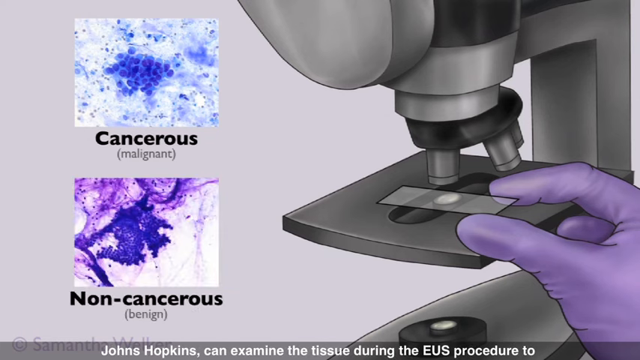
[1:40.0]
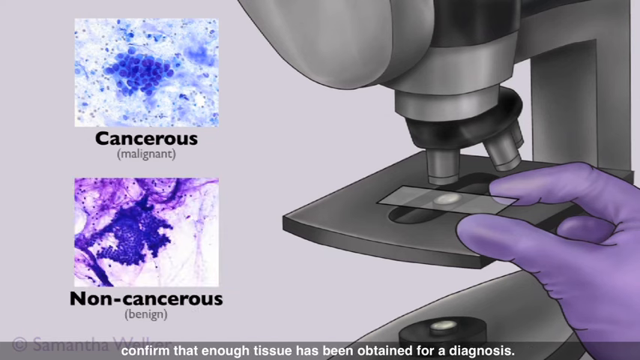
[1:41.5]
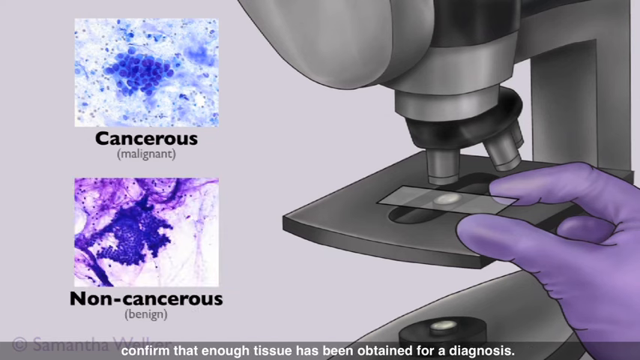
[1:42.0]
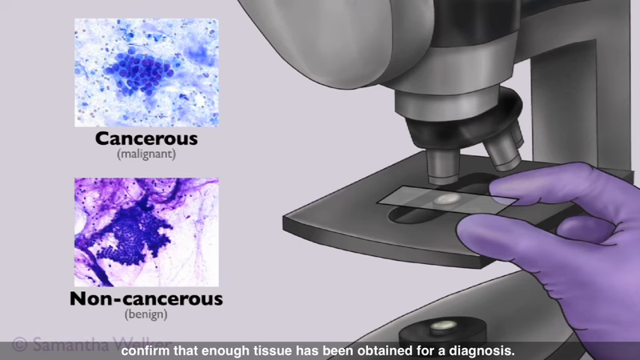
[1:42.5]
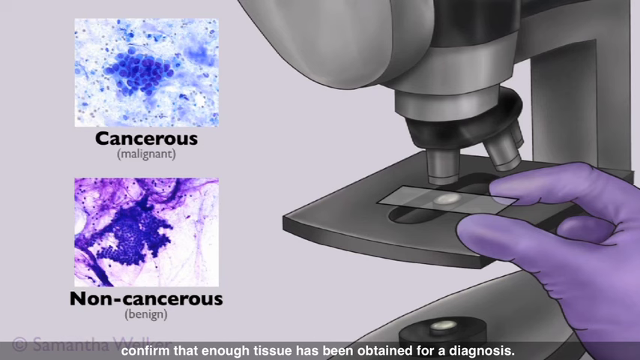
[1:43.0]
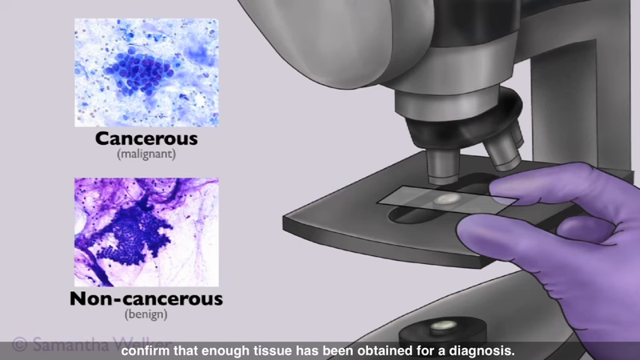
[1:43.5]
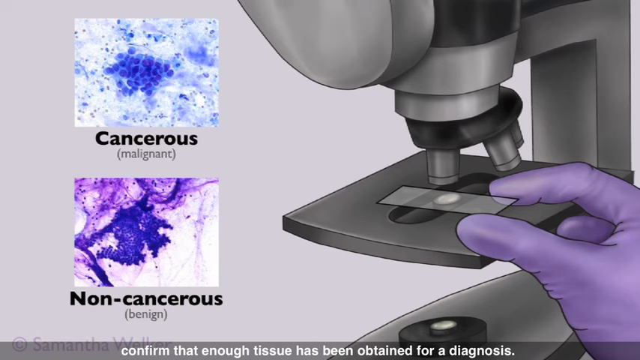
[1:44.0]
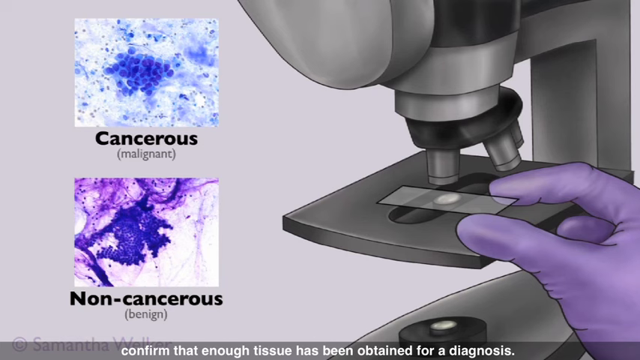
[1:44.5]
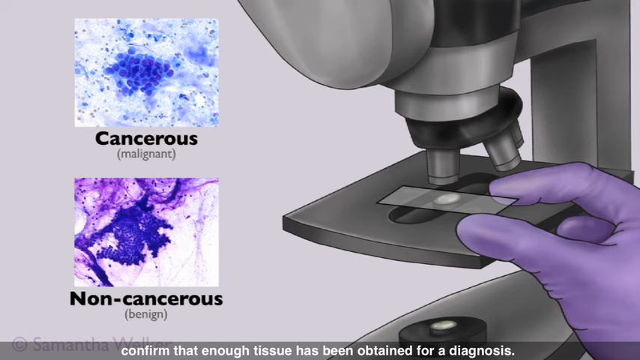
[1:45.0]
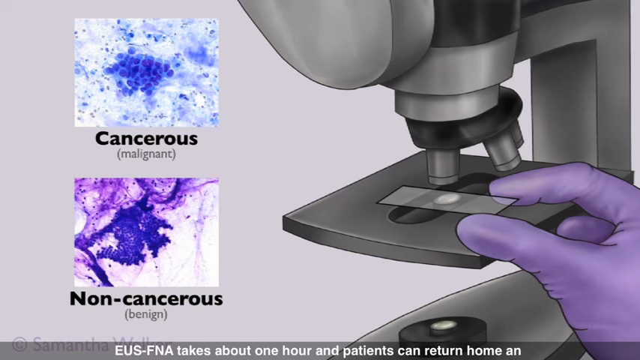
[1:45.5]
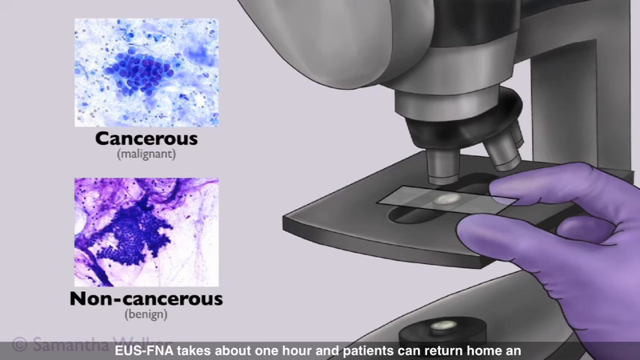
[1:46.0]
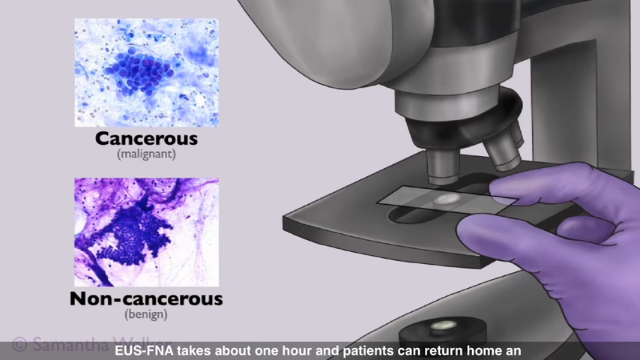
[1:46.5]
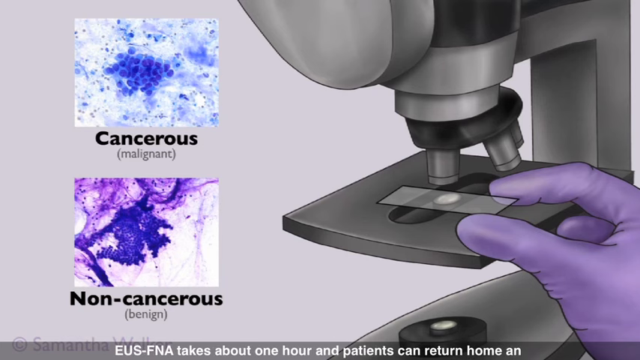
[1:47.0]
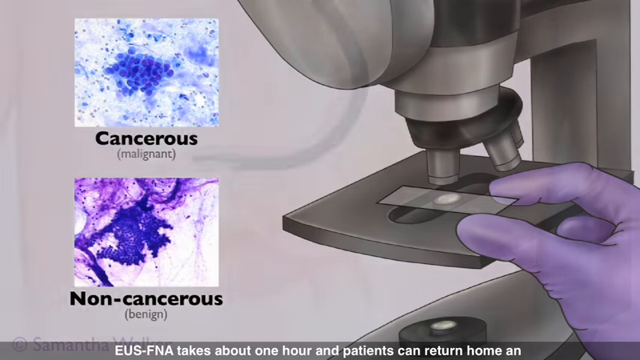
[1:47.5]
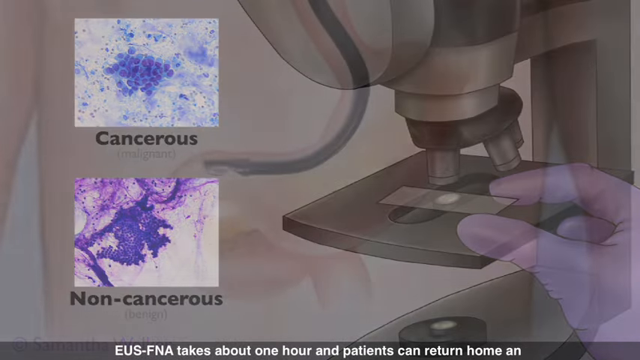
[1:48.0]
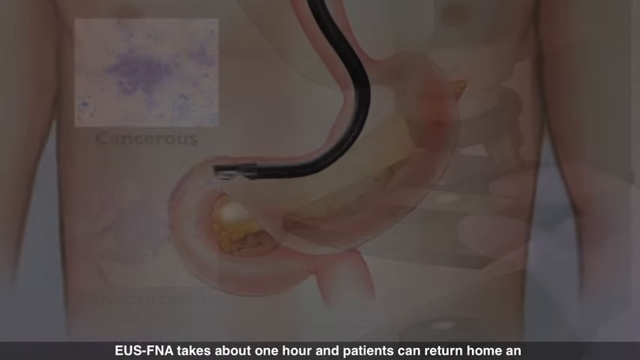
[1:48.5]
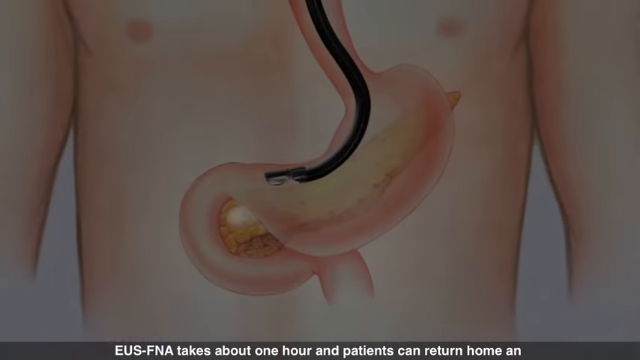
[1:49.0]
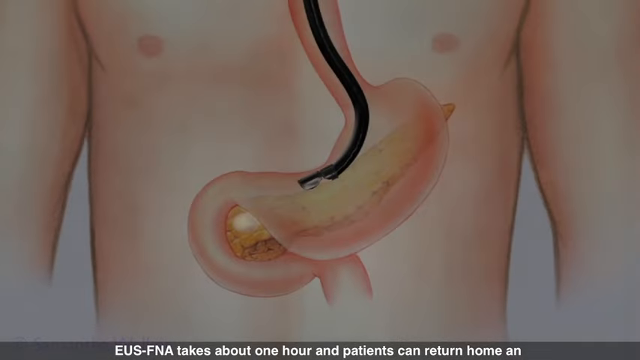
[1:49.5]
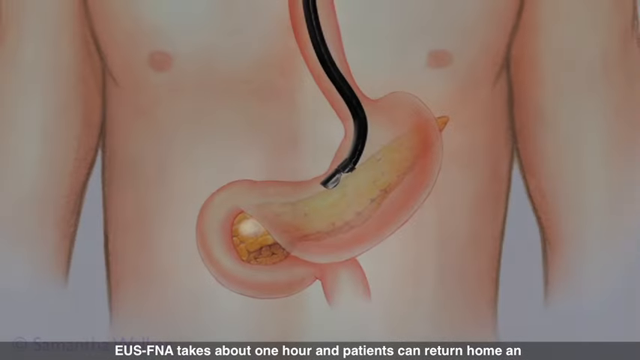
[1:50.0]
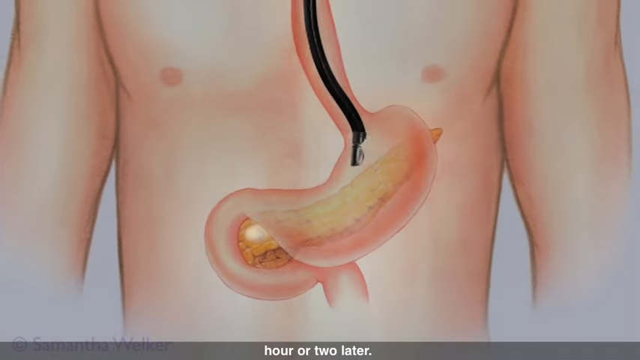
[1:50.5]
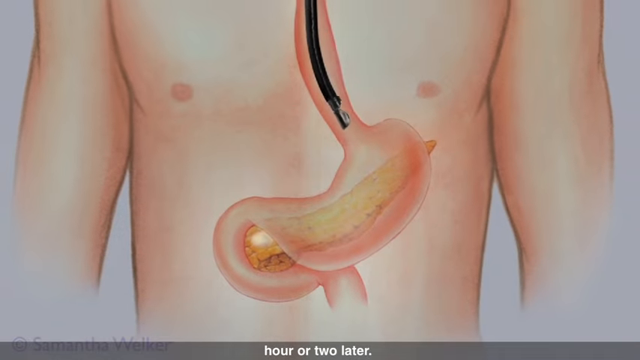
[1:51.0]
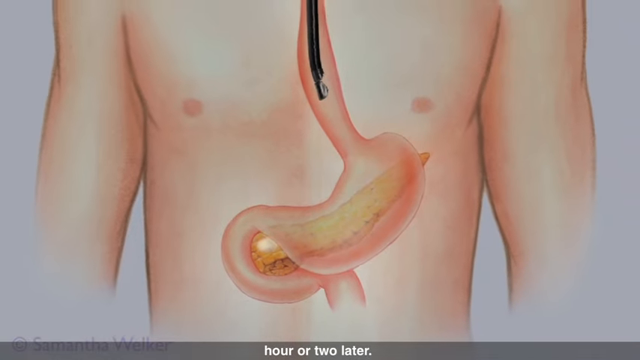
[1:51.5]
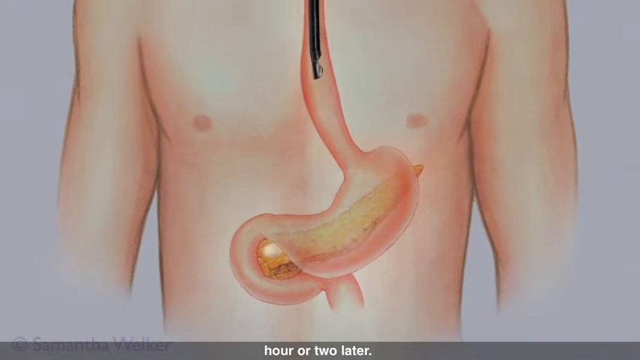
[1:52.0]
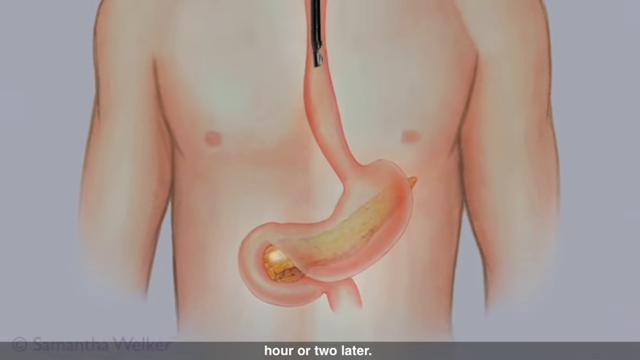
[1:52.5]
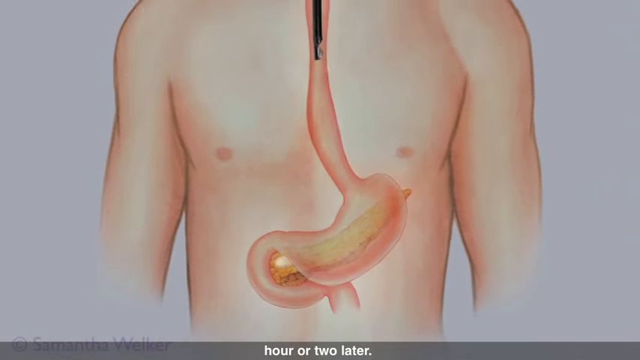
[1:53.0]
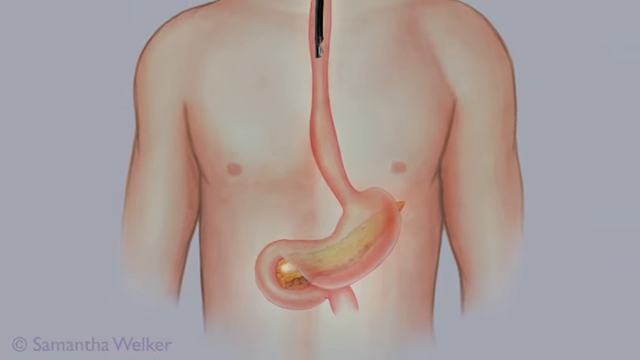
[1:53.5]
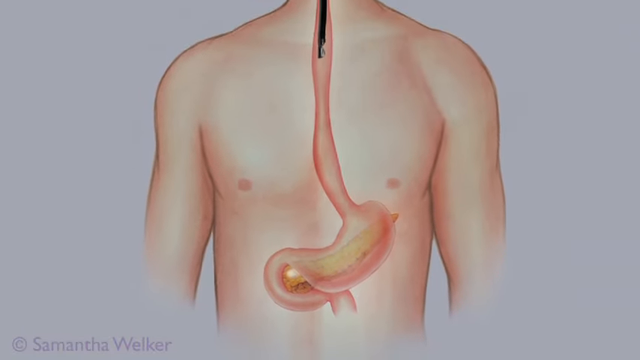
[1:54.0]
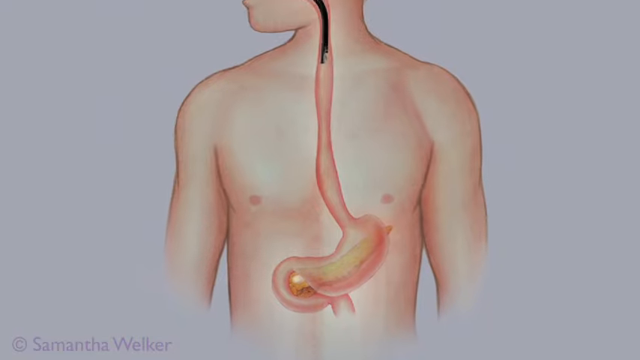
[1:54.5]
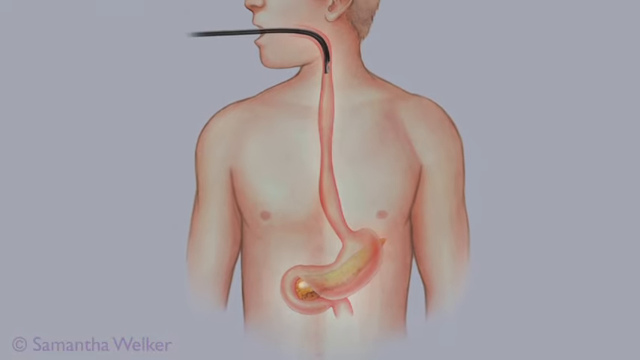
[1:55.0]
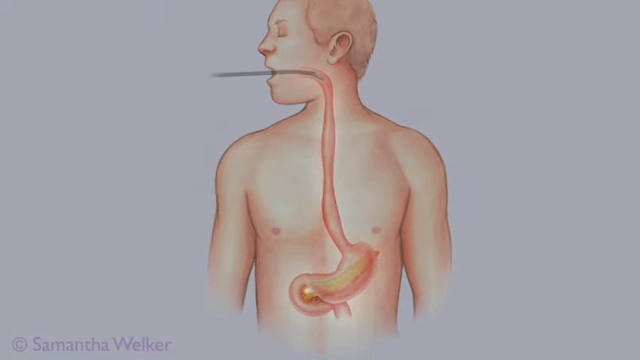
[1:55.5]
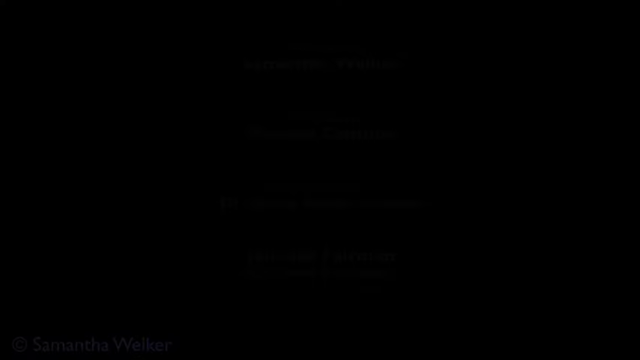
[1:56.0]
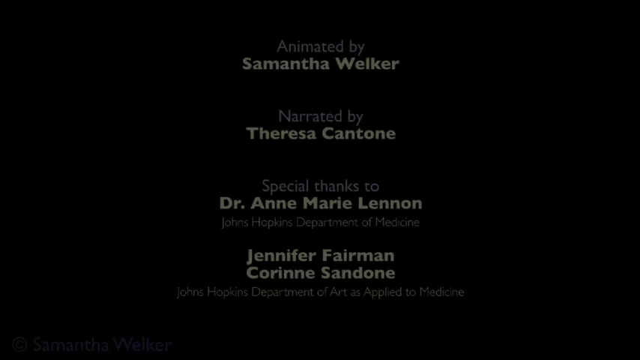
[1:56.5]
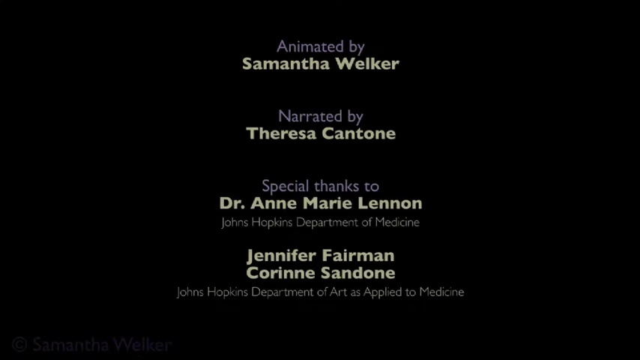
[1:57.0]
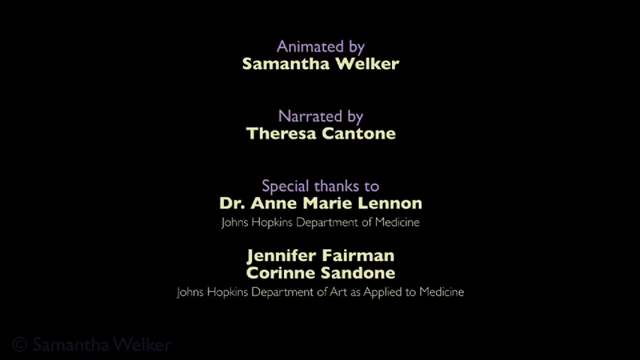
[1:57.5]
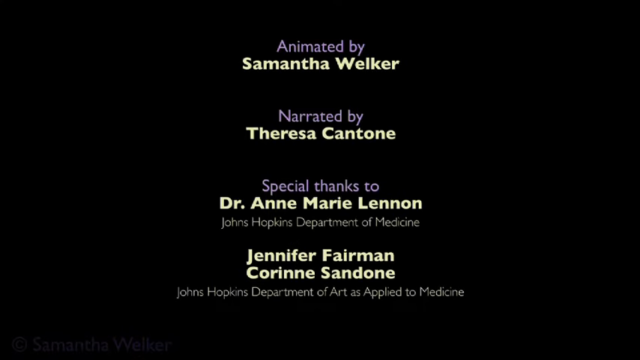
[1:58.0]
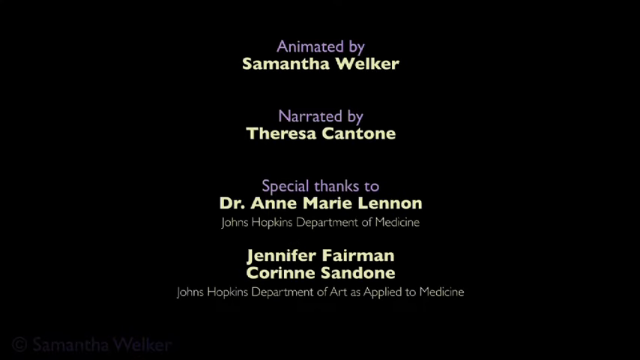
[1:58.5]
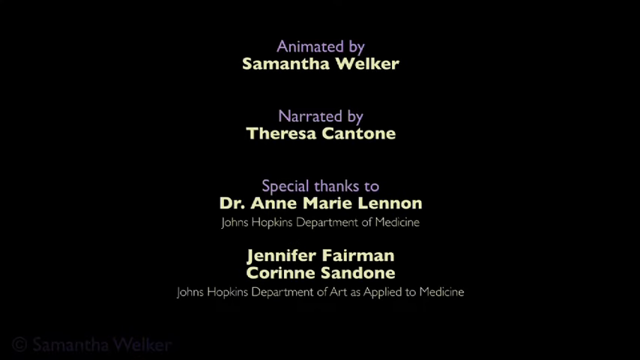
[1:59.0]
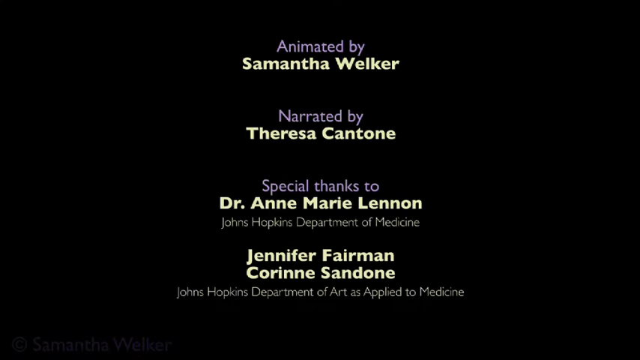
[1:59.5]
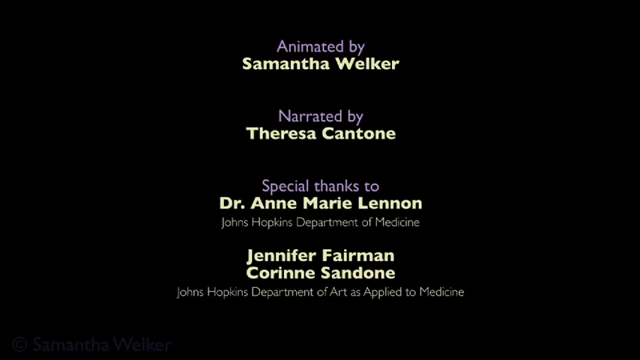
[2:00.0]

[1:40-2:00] The microscope remains in view as a technician slides a rectangular piece of glass onto it. Only the technician's hand is visible, in a purple nitrile glove, with the thumb and pointer finger holding either side of the glass as it slides into position. On the left side are two squares. The top square has a white background with navy blue spots scattered throughout and a cluster of small round blue circles in the middle. Beneath it are the words "cancerous" and, under that, "malignant". Below these is the other square, which has a white background with purple swirling areas from the upper left corner into the middle, and beneath them a cluster of much smaller blue circles. Under this square are the words "non-cancerous" and, under that, "benign". Next, the image of the man's body and digestive tract returns, and the probe retracts and exits his digestive tract.